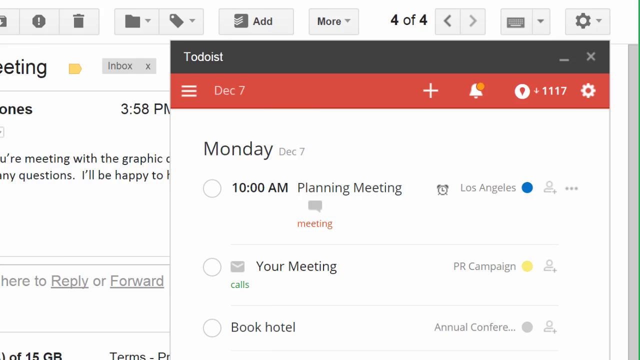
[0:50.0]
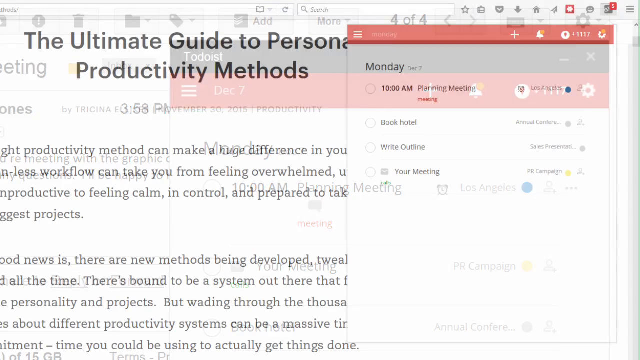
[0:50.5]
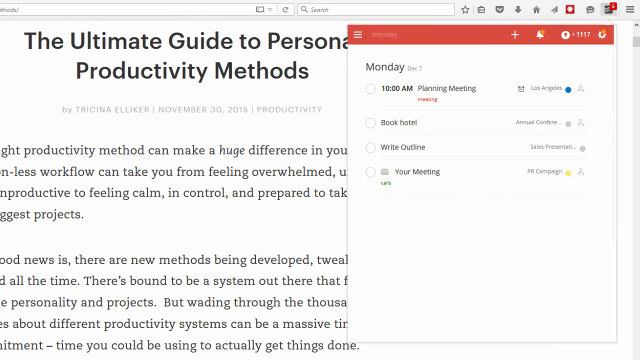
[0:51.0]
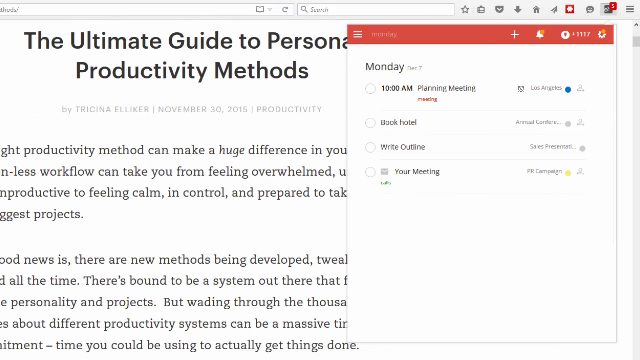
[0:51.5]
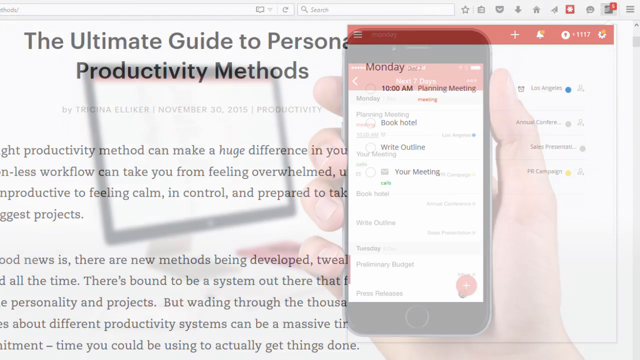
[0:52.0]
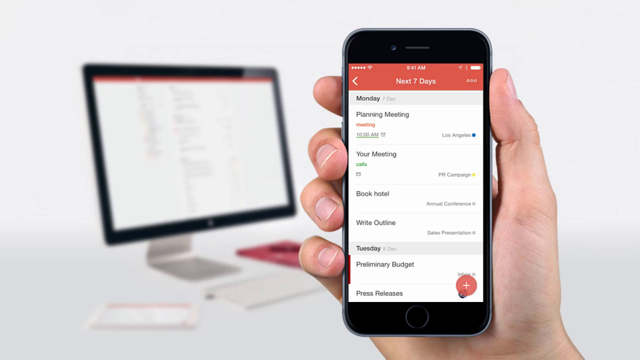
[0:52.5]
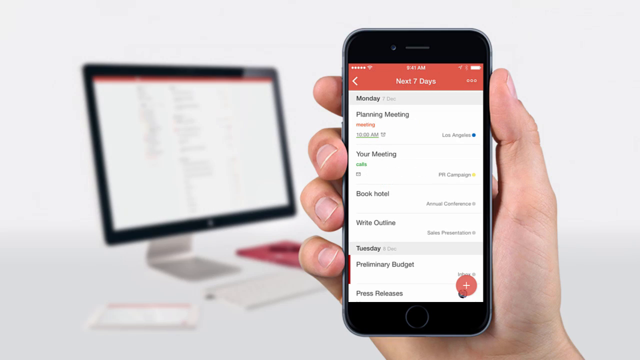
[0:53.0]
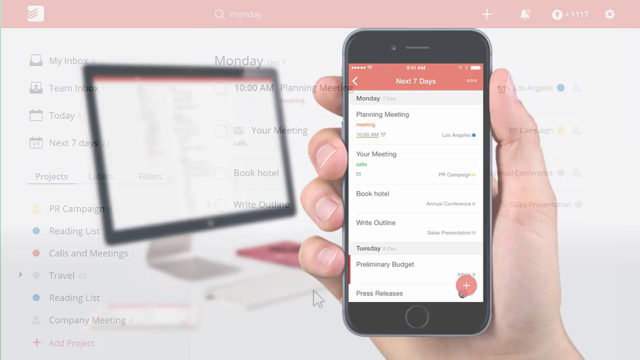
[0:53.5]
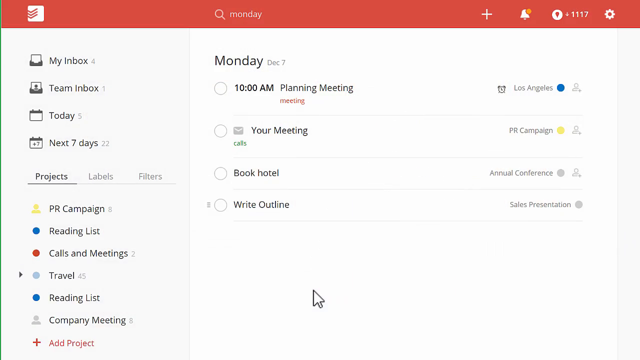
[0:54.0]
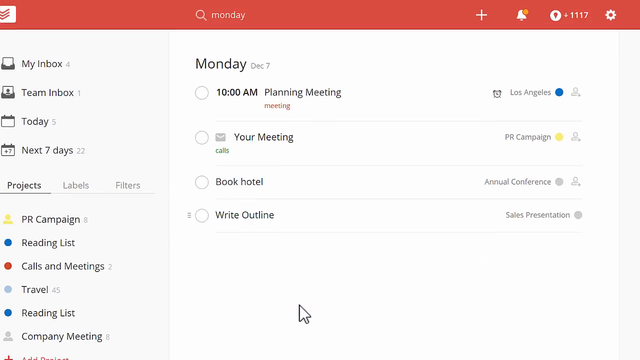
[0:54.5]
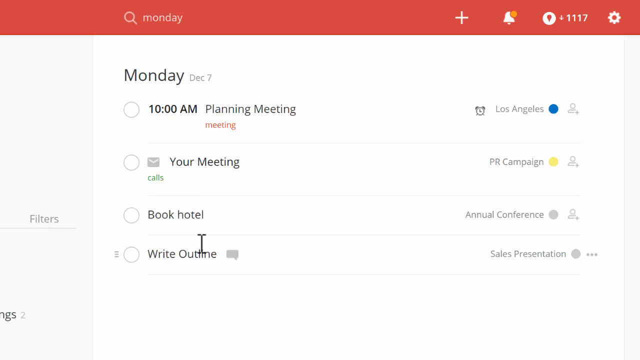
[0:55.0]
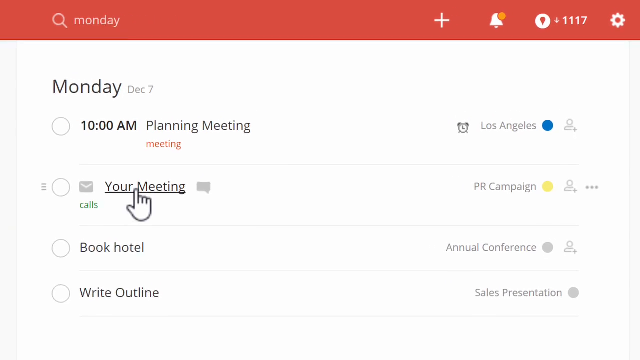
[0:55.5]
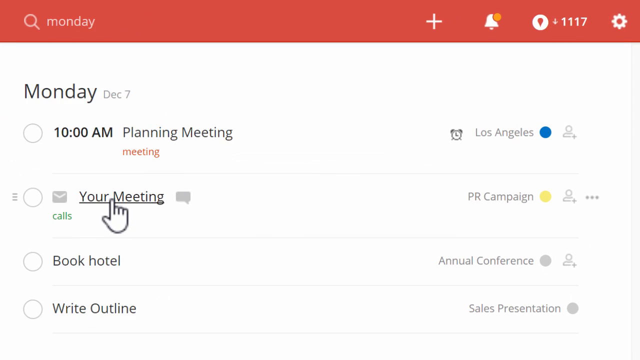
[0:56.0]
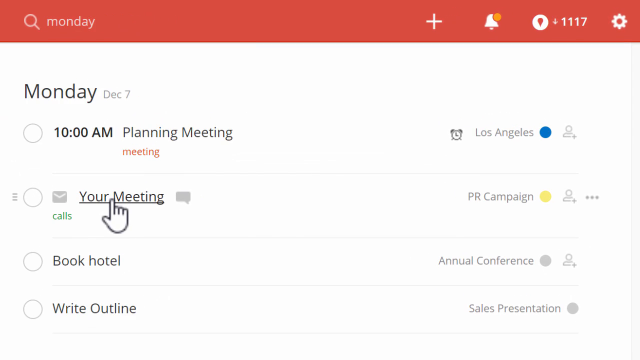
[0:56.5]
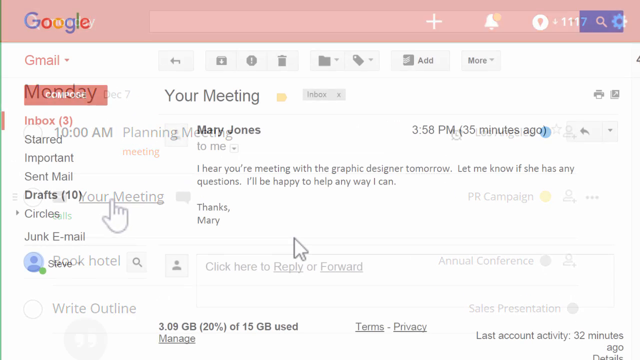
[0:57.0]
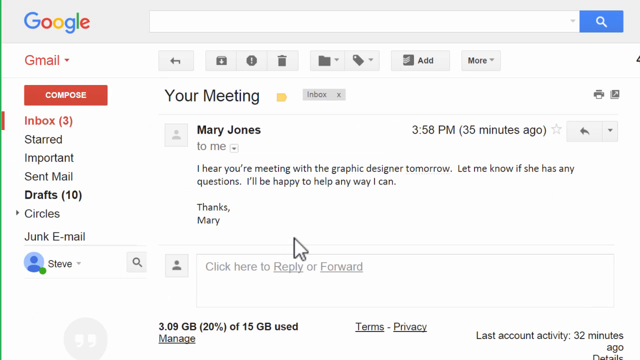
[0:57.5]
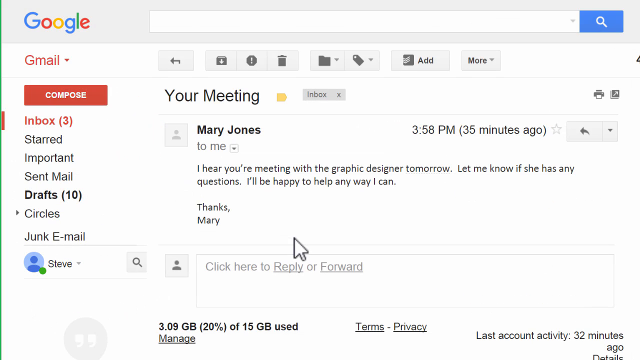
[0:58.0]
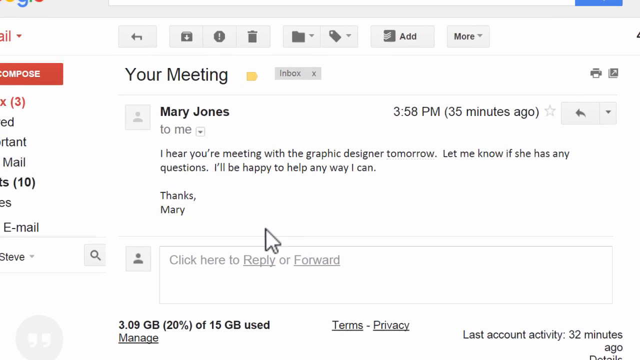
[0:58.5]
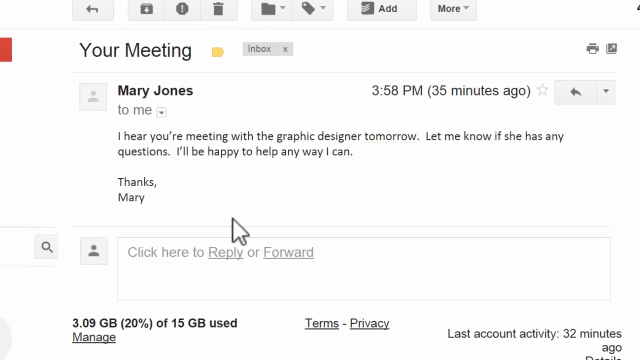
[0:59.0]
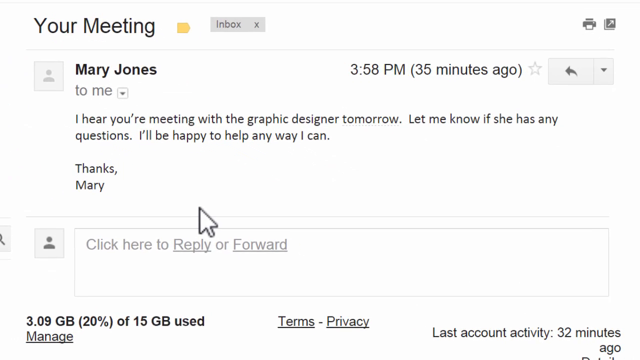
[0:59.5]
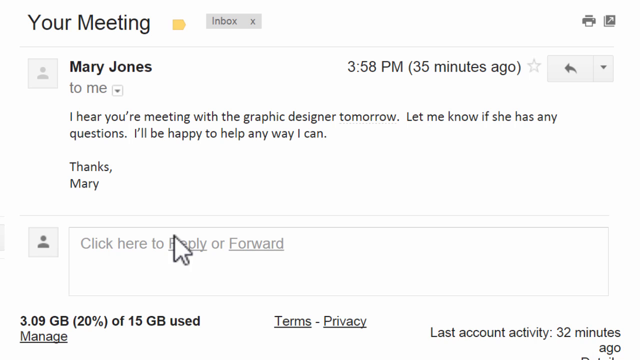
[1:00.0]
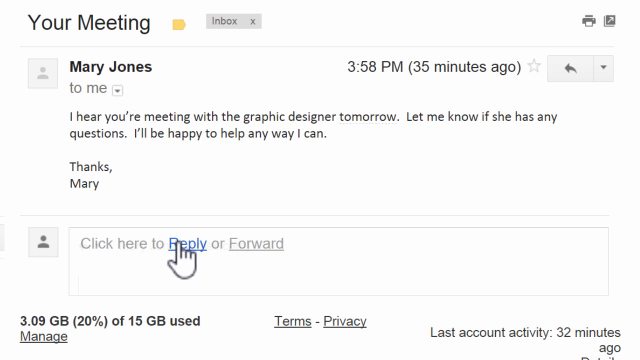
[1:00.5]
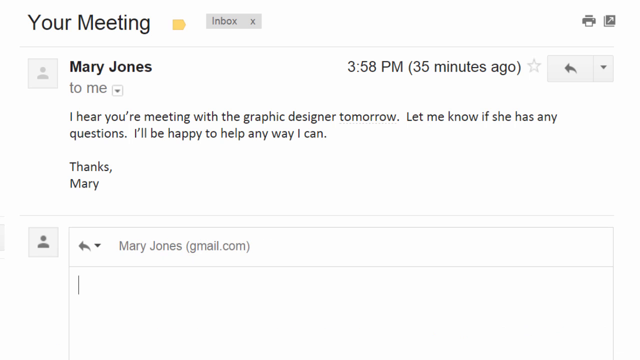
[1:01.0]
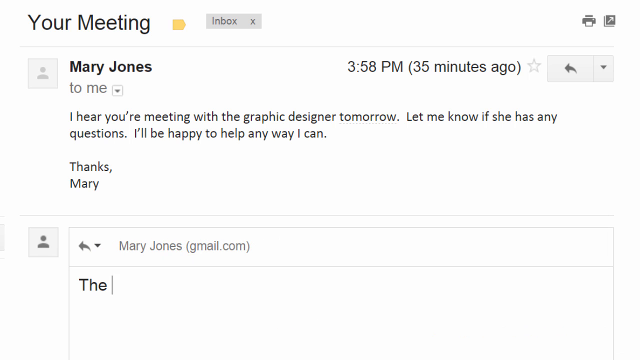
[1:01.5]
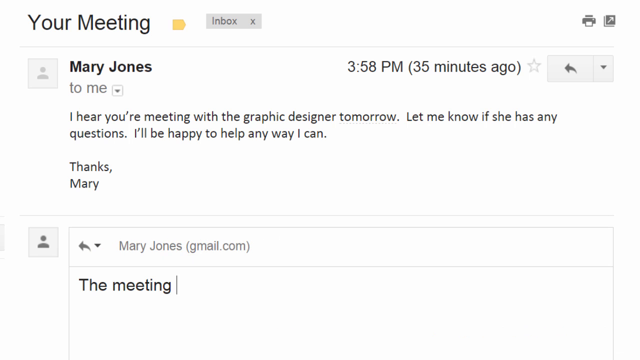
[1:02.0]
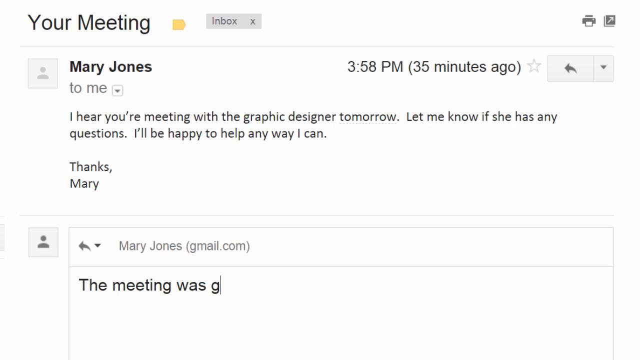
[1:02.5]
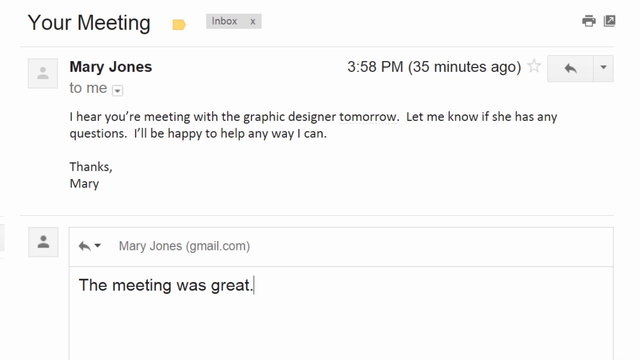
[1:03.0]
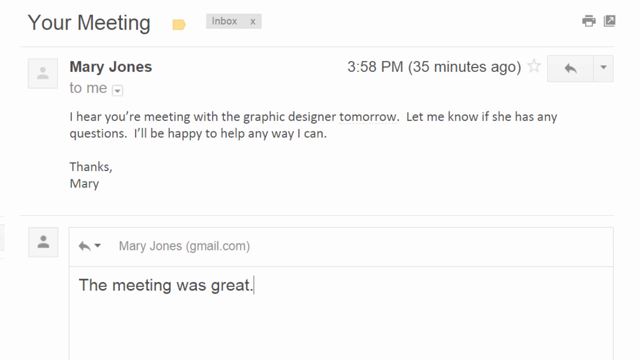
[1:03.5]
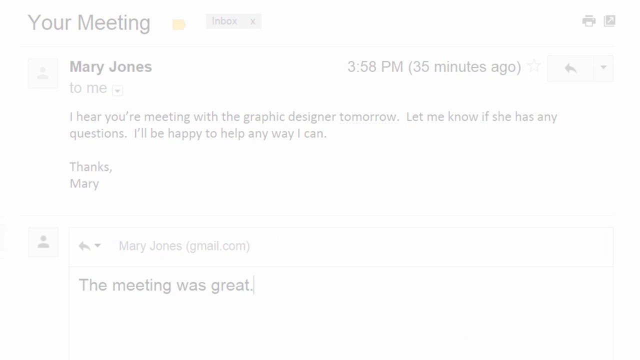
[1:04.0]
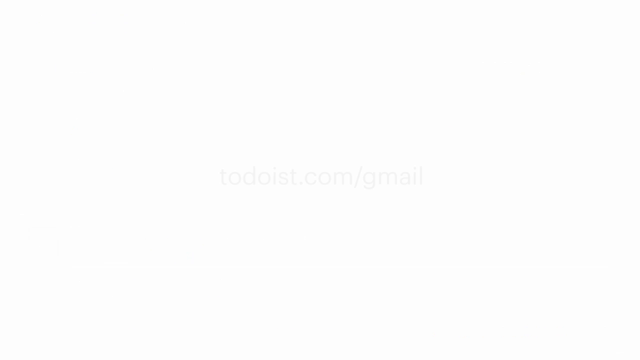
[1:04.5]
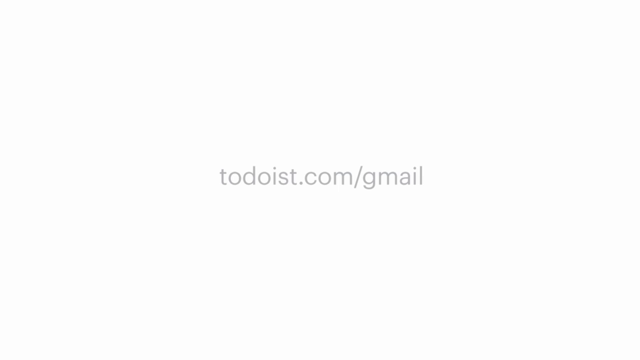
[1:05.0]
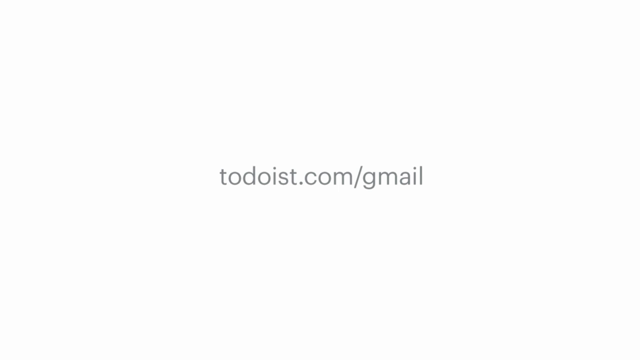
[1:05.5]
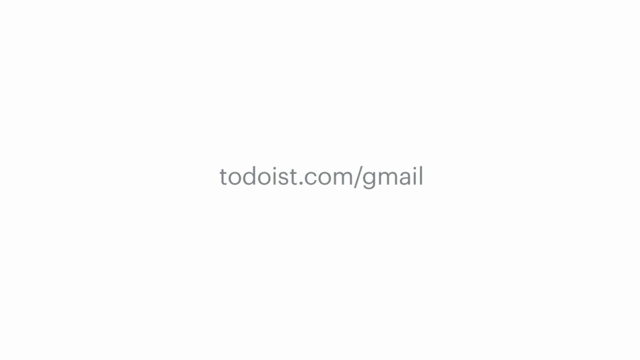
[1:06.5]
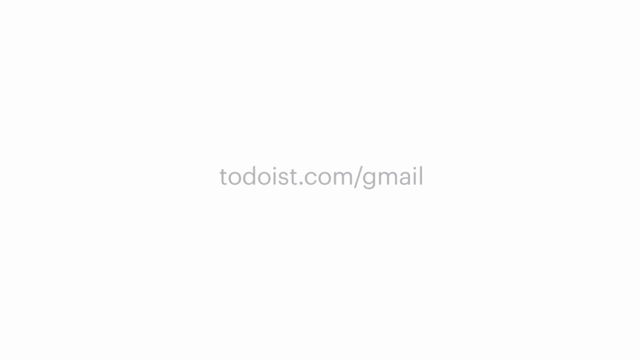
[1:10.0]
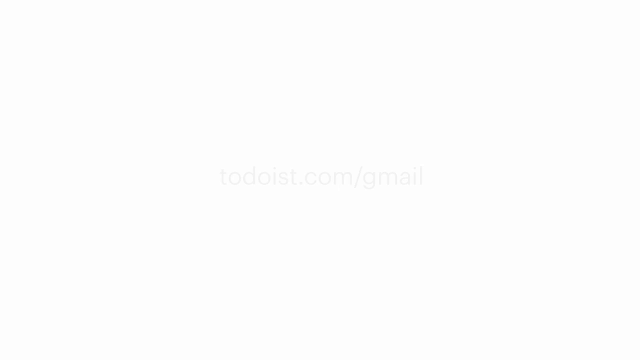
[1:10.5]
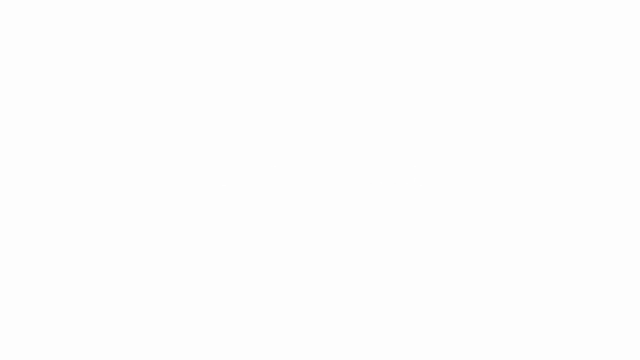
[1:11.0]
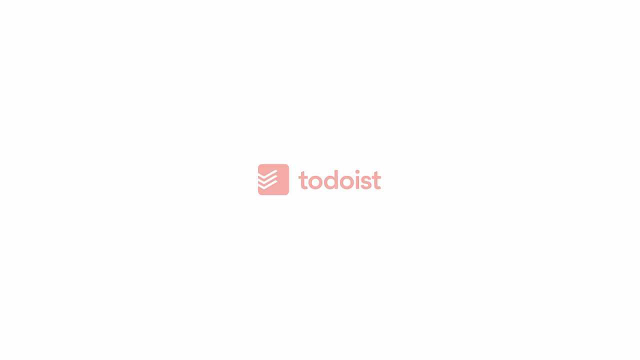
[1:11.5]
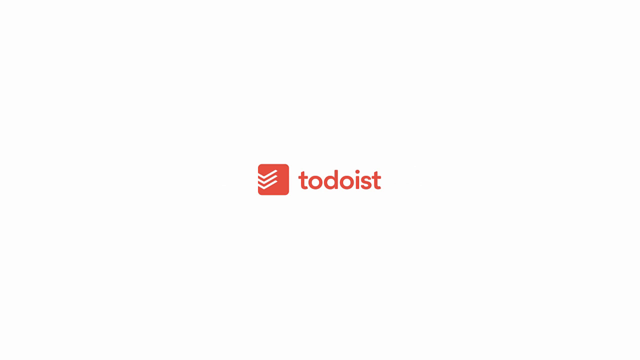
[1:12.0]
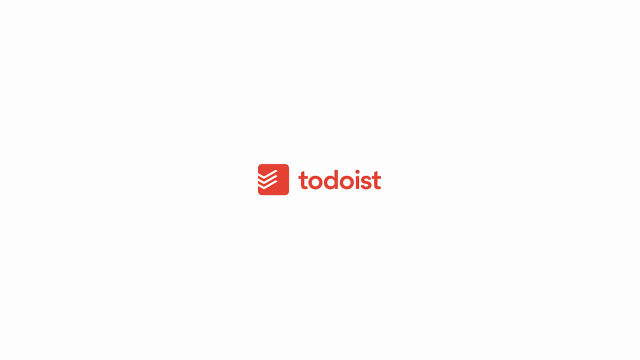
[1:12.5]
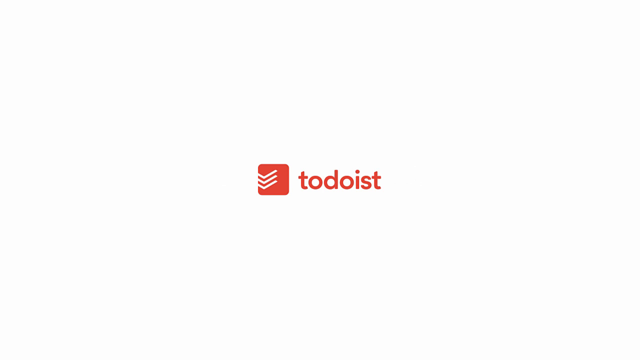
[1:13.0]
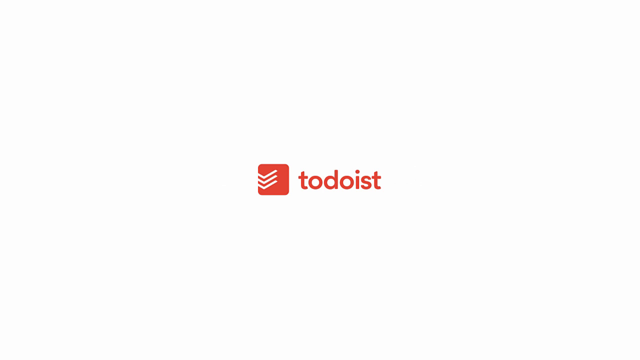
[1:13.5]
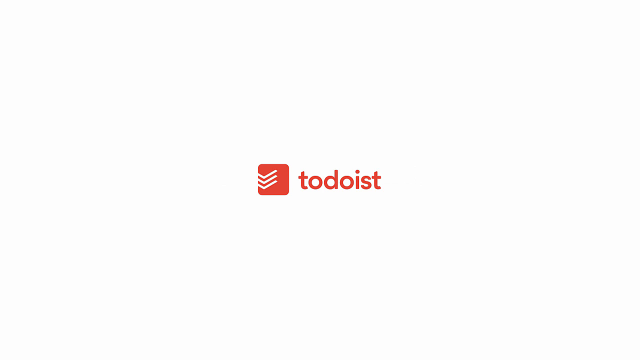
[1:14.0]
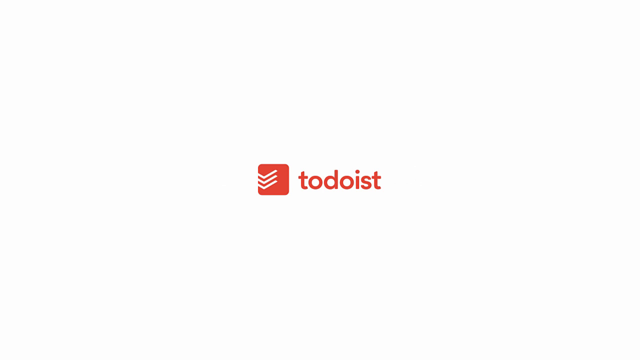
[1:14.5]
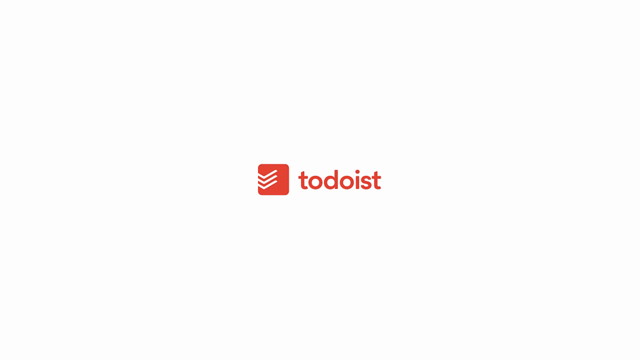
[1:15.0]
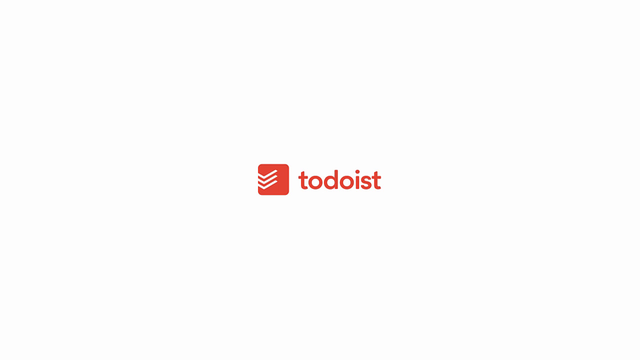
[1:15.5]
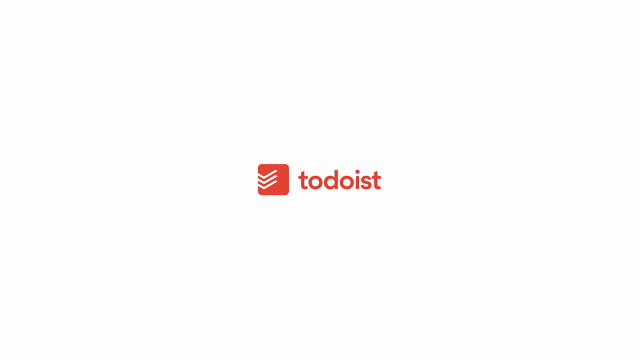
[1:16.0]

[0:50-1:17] The scene starts with "the ultimate guide to personal productivity methods," and Todoist appears to be pulled up on the right side of the screen, showing "Monday, December the 7th" with some tasks listed under the date. A person, appearing to be either a white female or a white male, holds a phone whose screen shows "next seven days" with Monday and different tasks under it. In the background is a computer screen, and the background is slightly blurred. The video then switches to the Todoist screen with different tasks listed for Monday, December the 7th. It zooms in on a mouse hand over "your meeting." The person selects "your meeting," and the meeting details pop up for Mary Jones at 3:58 pm, supposed to take place 35 minutes ago, with a message from Mary. The camera zooms in, and the person selects reply and types a reply. Then "todoist.com/gmail" pops up on the screen, followed by Todoist with the red logo off to the side on a white screen.